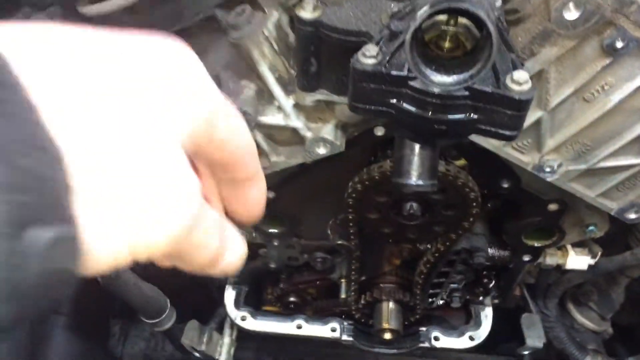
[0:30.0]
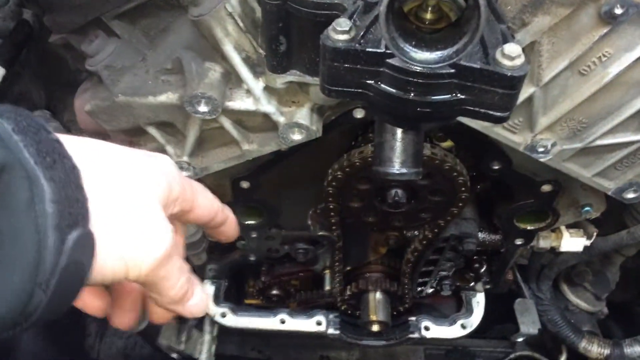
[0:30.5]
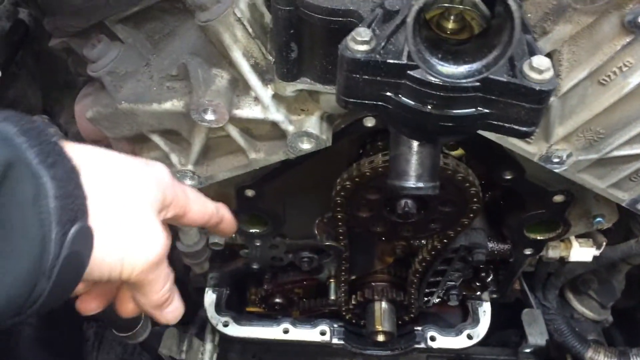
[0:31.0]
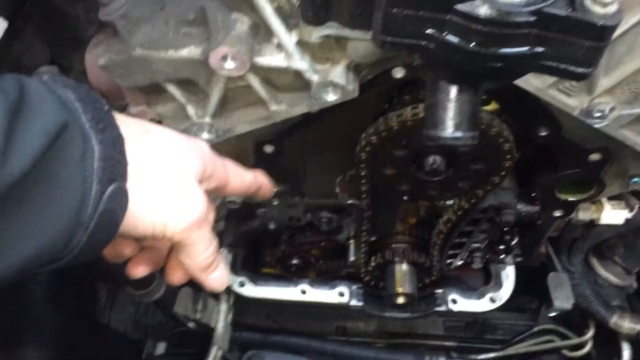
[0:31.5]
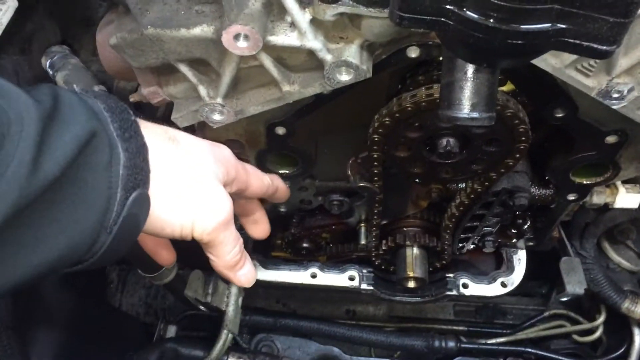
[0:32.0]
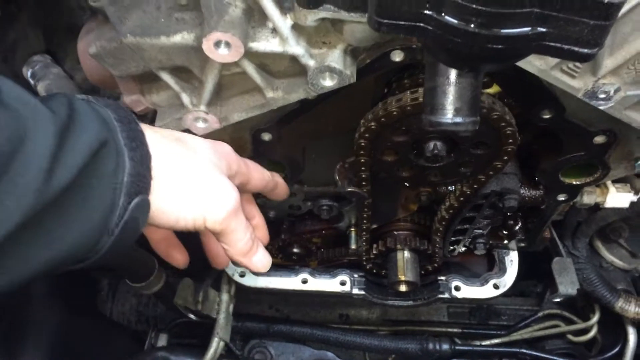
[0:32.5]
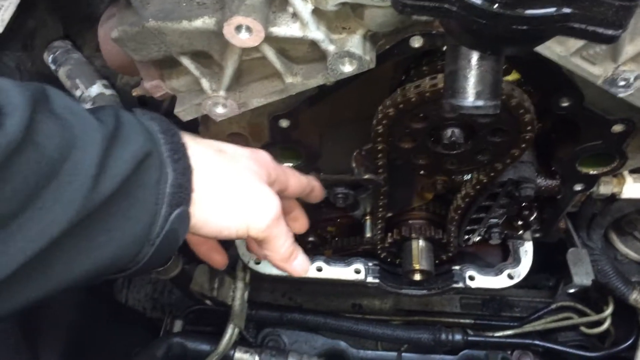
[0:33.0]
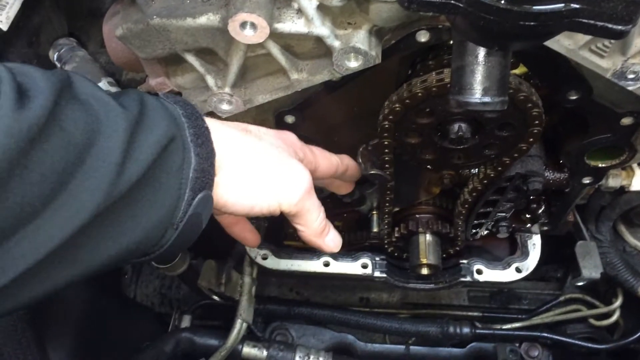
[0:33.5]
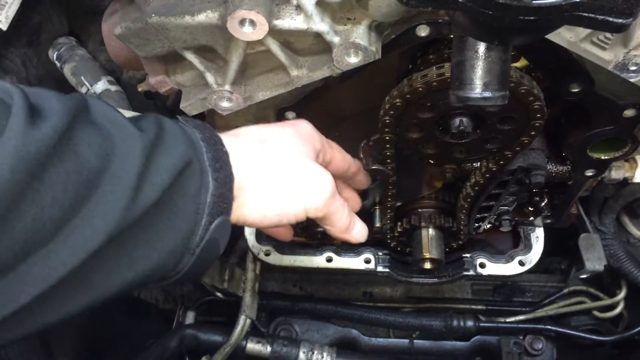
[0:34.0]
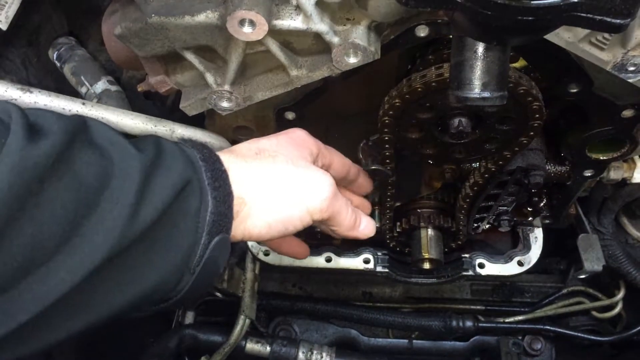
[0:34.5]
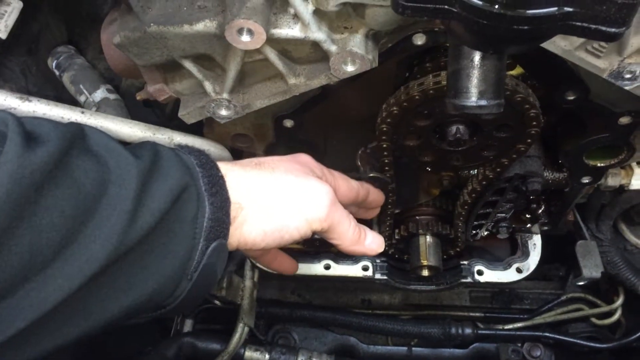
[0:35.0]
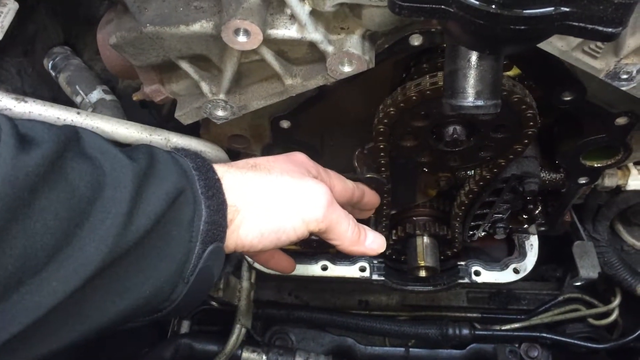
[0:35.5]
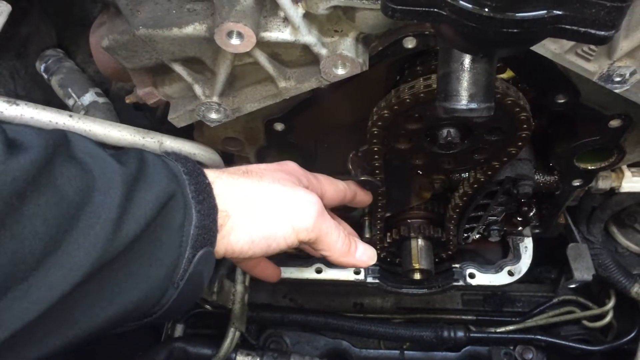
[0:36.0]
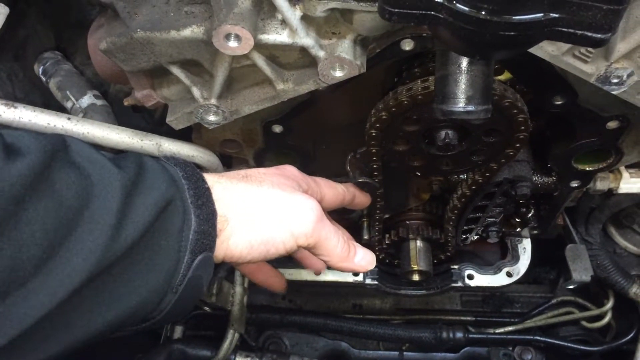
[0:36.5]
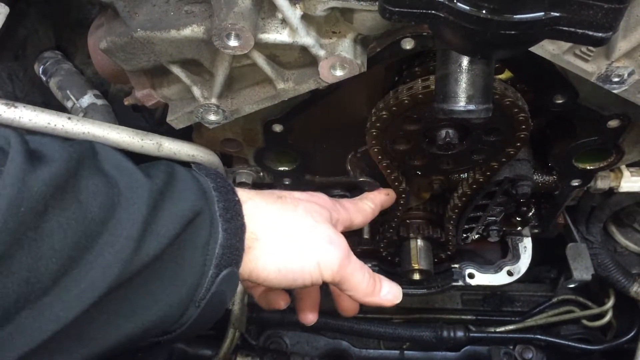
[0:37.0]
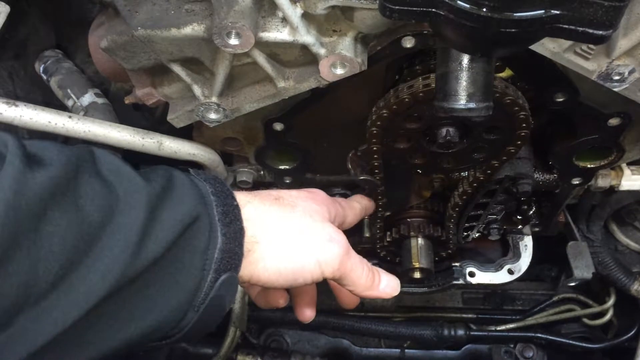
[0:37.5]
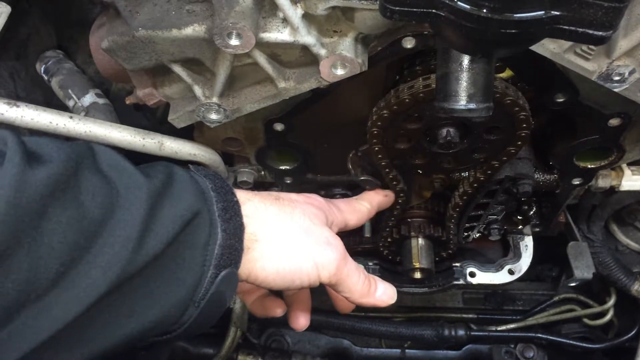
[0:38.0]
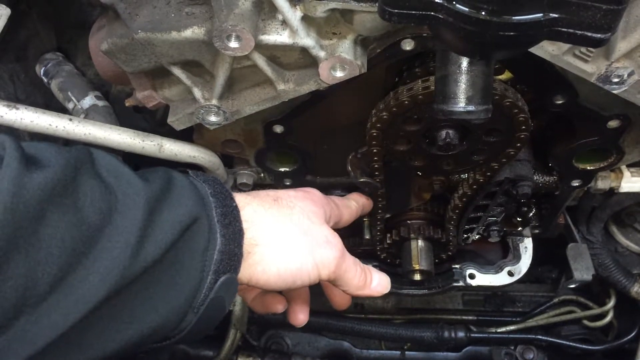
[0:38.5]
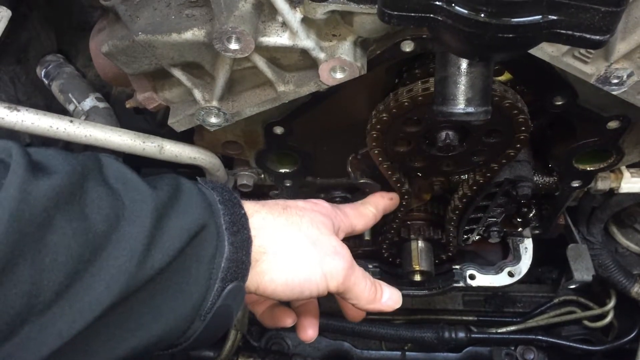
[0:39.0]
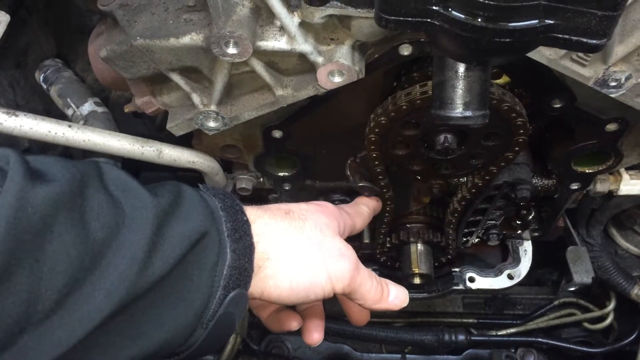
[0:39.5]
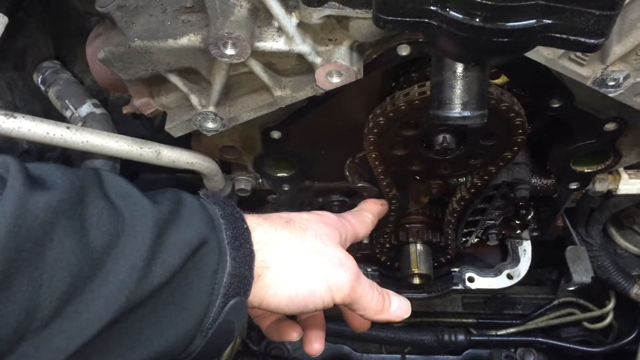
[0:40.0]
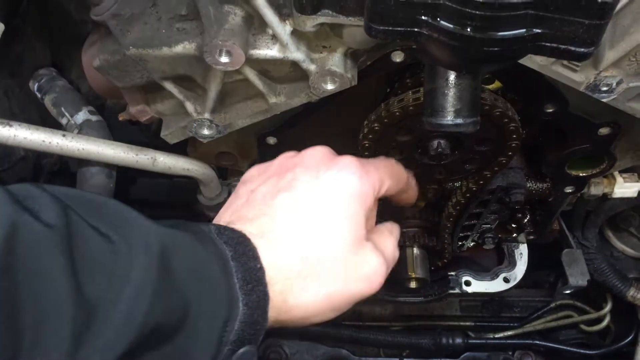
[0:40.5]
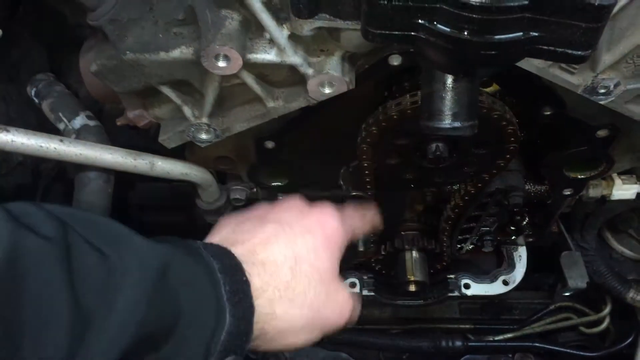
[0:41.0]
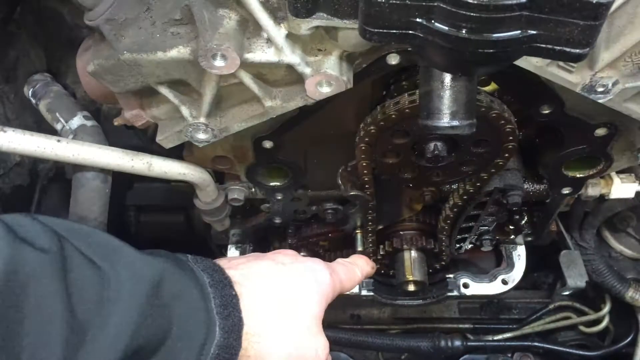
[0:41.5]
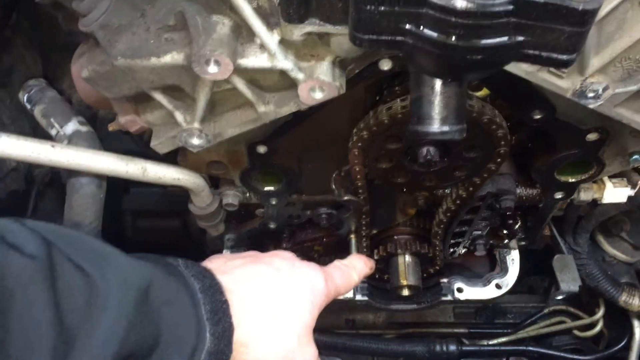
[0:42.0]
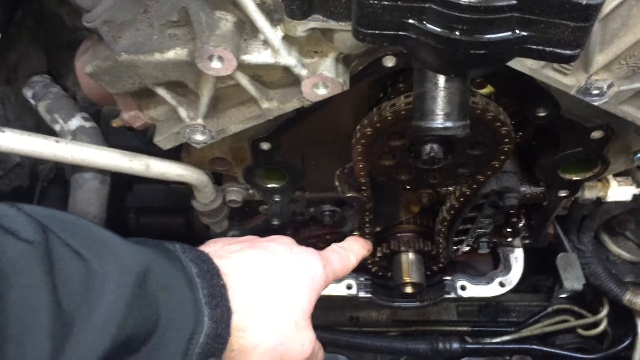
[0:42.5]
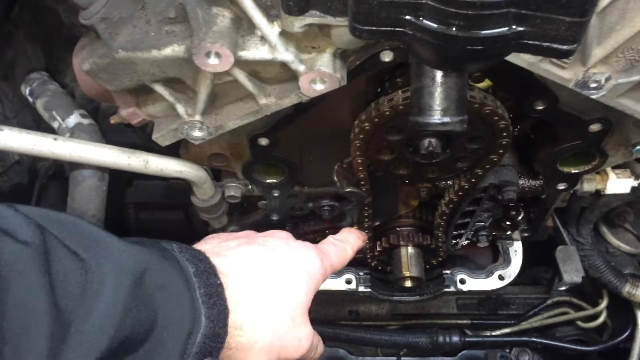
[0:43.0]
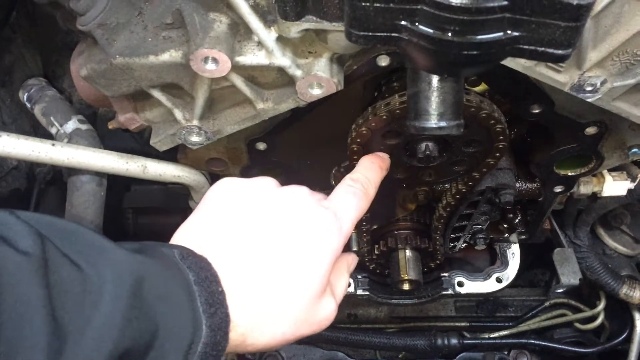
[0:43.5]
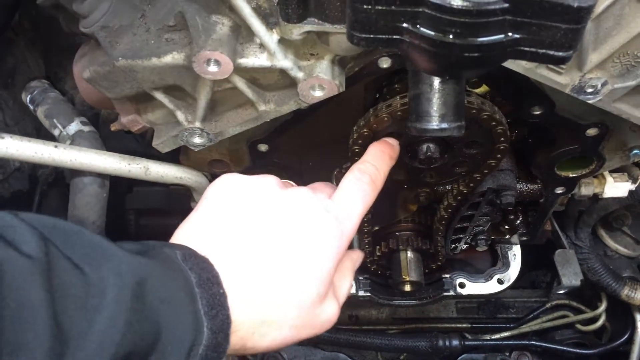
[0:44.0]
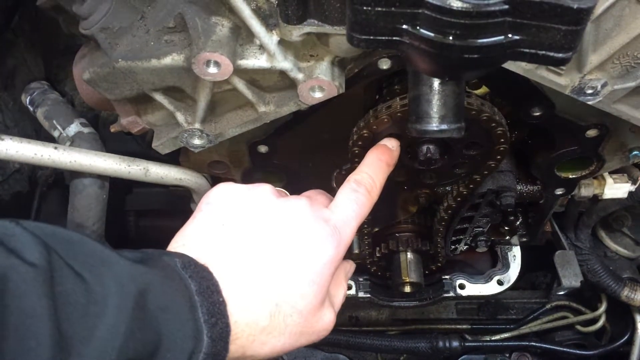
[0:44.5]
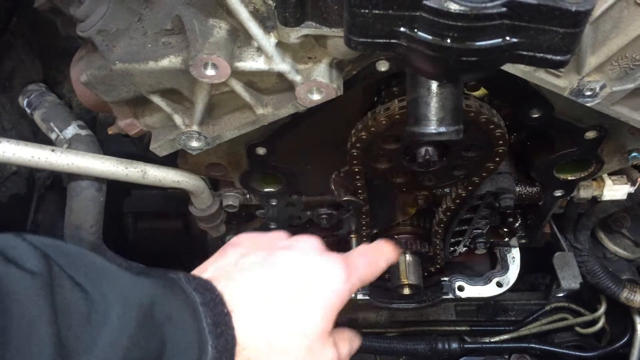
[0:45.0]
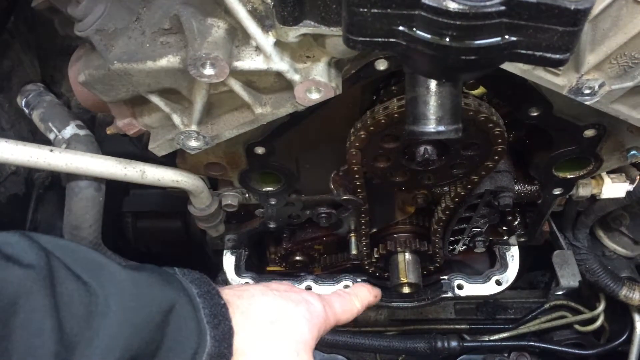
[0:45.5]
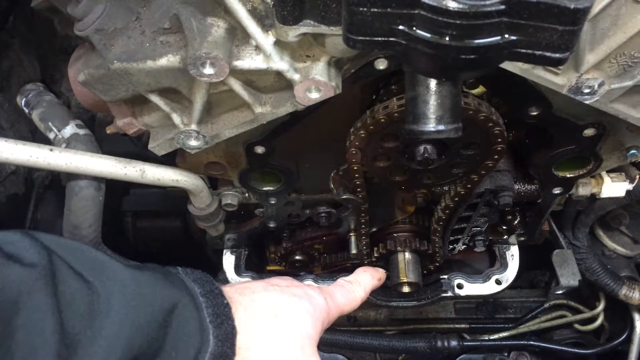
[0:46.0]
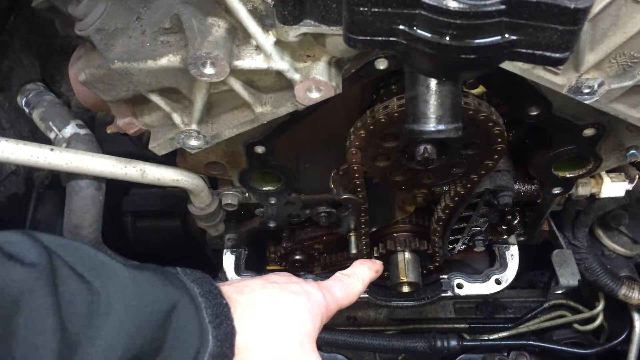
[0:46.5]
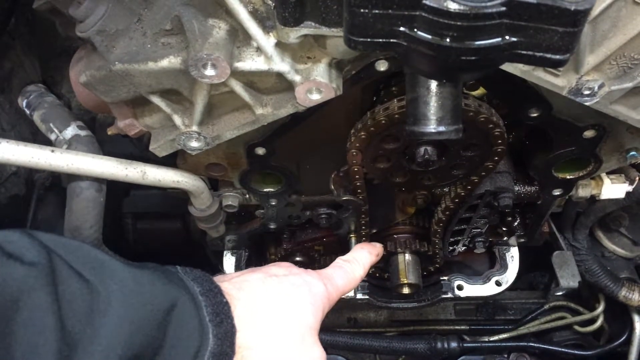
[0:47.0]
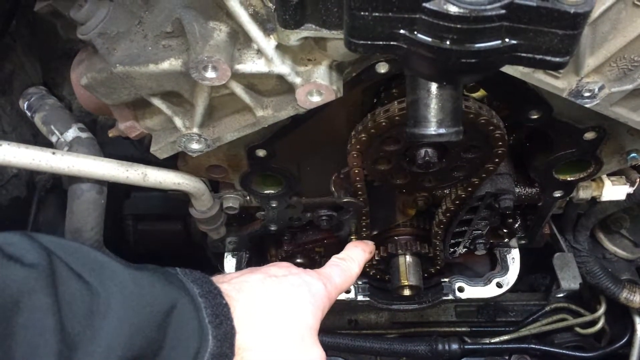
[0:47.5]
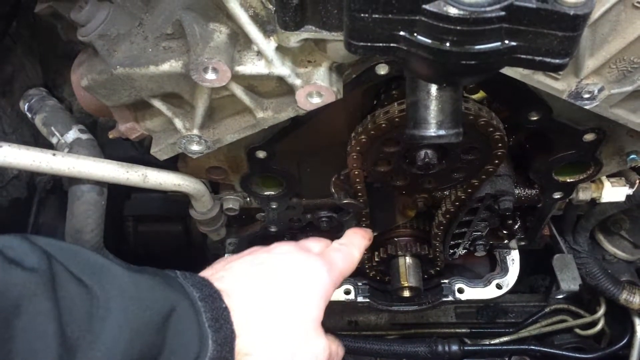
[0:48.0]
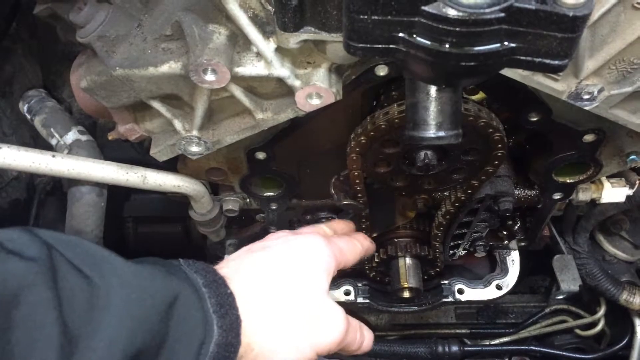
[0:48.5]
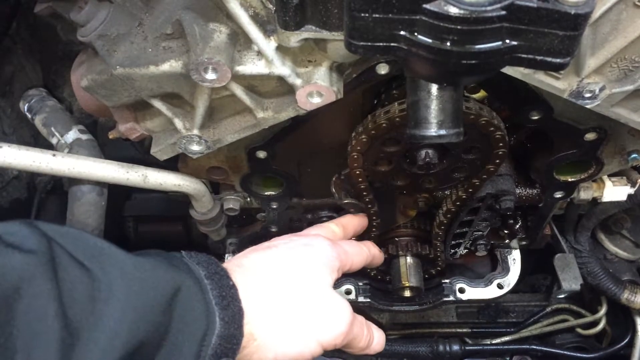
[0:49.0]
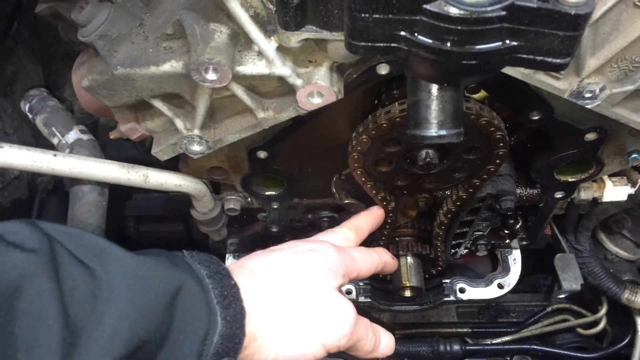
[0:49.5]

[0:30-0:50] The fair-colored hand is seen in more detail, pointing; it seems to be a man's, and he wears a black windbreaker jacket. He uses his index and middle fingers to point to the lever, then uses his index finger to move it. The lever is metal but flexible, almost like a bicycle chain attached to the car, and he pushes it inside and lets it flow back outward. He points to where the chain is attached at both ends: the wheel is smaller at the bottom and bigger at the top. He then focuses his hand on the left side of the chain. The chain has two white or gray covers or boxes at its top, and what seems to be a black handle or black box is also attached to it.